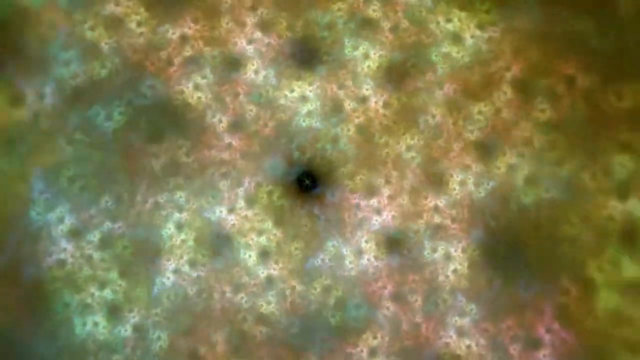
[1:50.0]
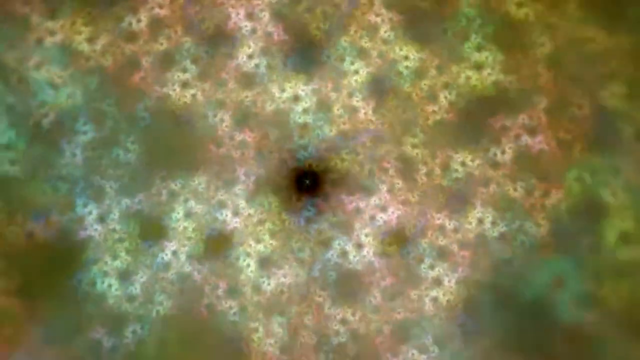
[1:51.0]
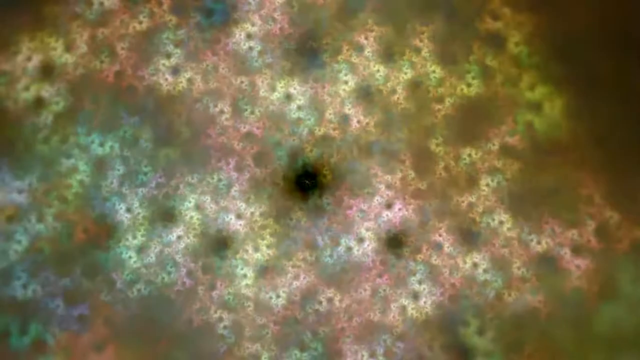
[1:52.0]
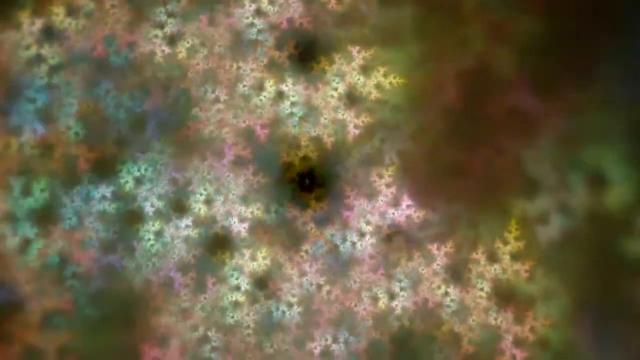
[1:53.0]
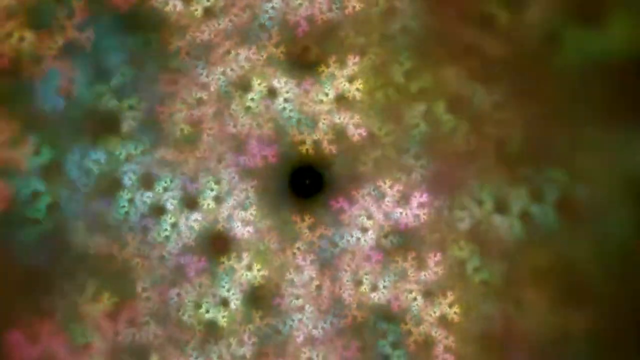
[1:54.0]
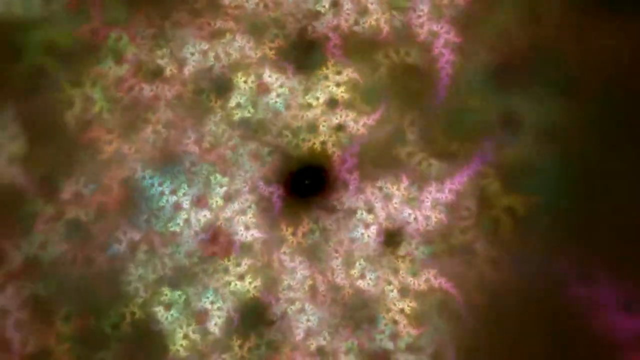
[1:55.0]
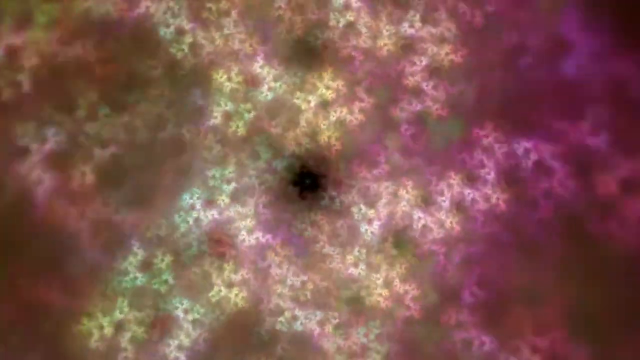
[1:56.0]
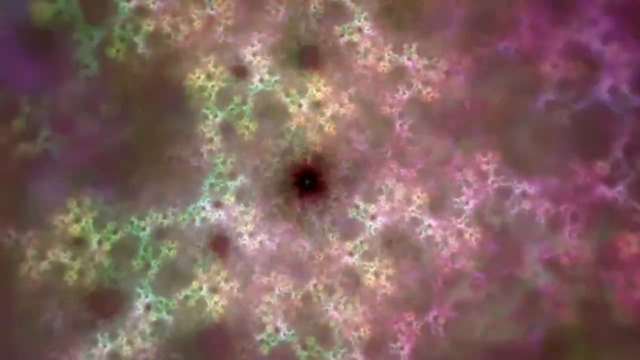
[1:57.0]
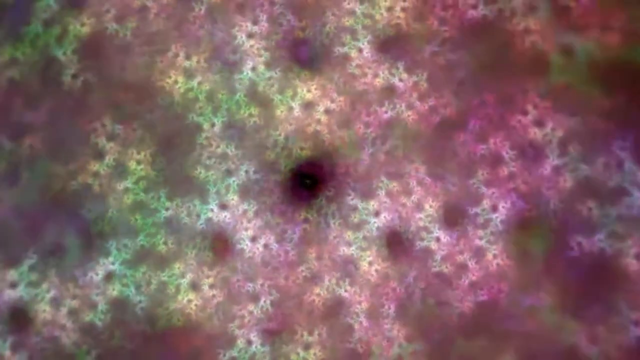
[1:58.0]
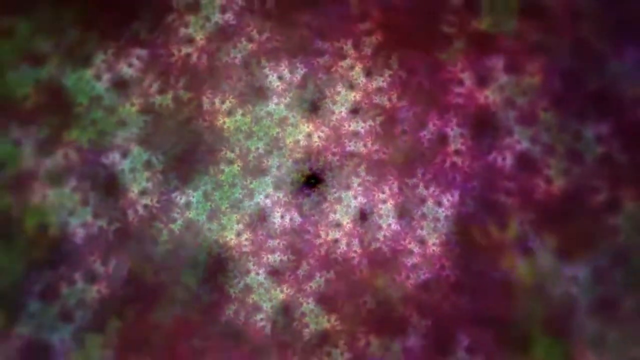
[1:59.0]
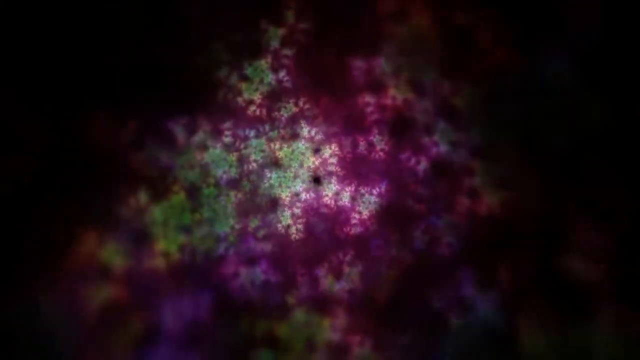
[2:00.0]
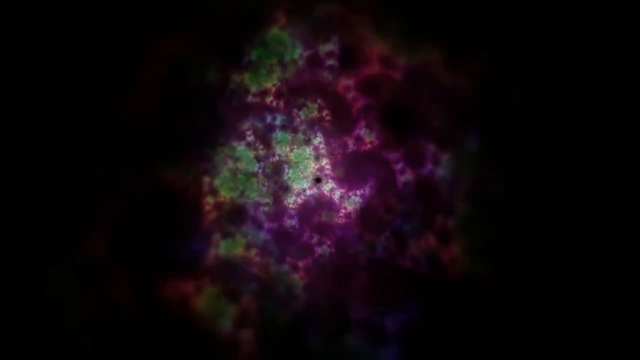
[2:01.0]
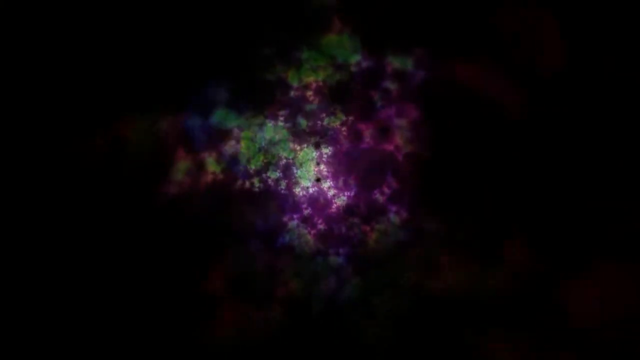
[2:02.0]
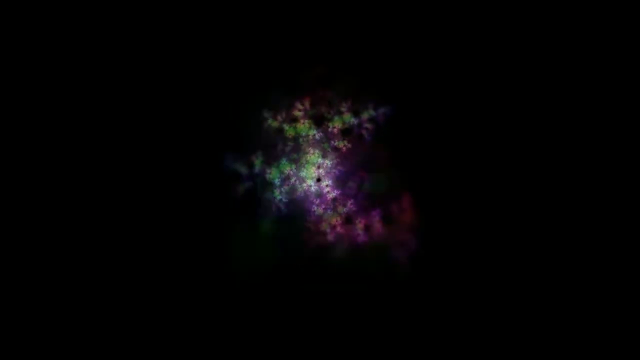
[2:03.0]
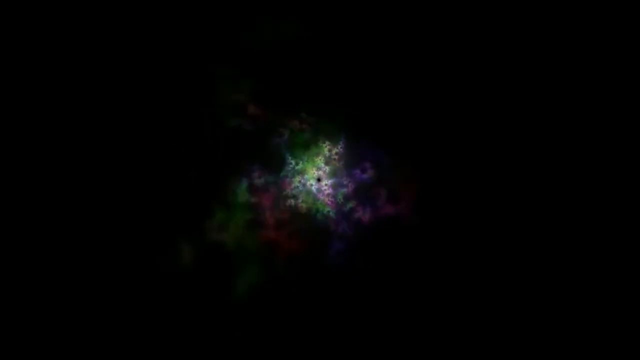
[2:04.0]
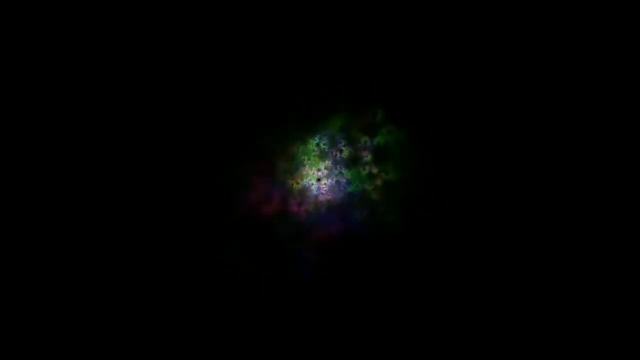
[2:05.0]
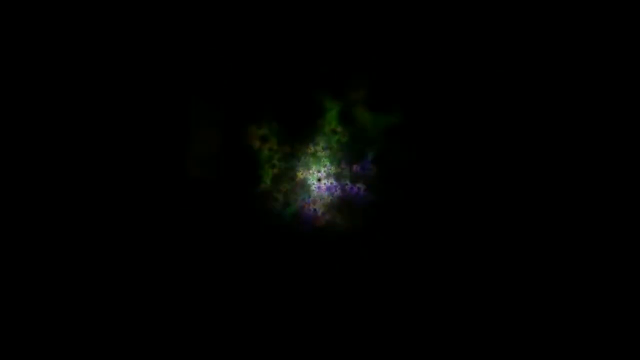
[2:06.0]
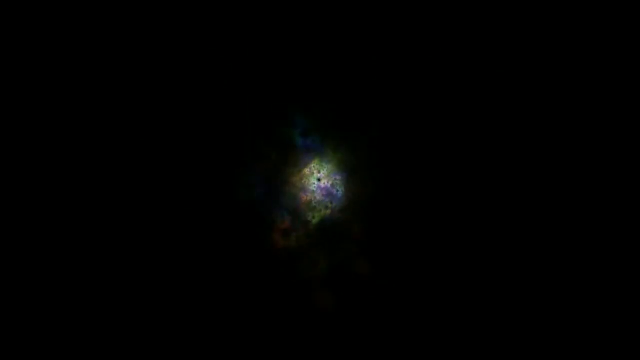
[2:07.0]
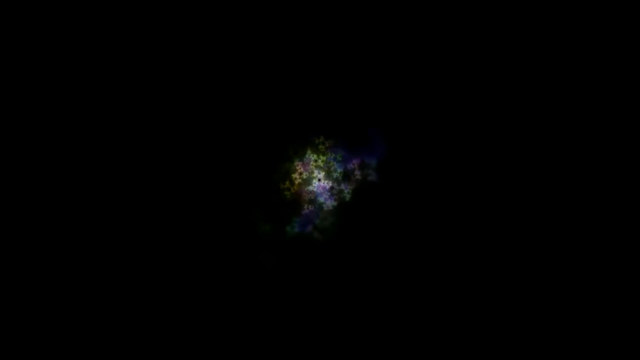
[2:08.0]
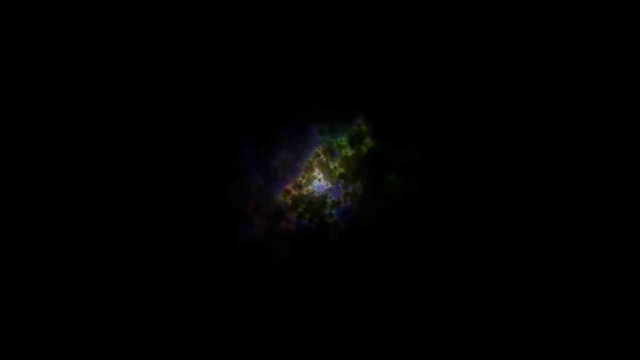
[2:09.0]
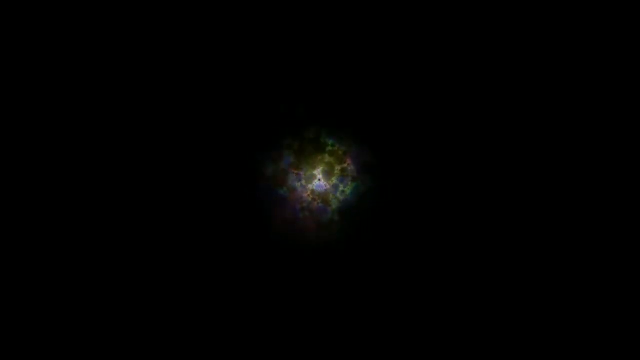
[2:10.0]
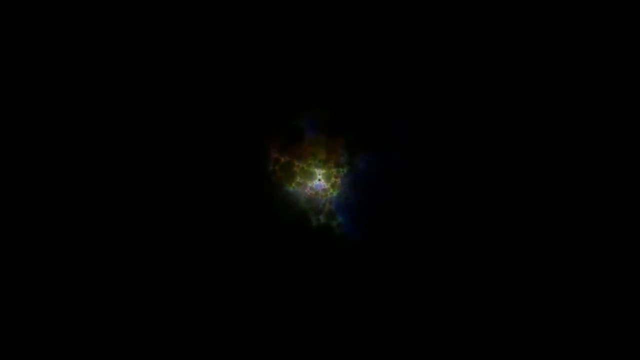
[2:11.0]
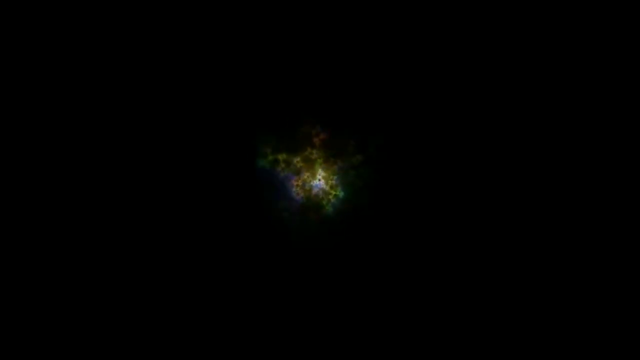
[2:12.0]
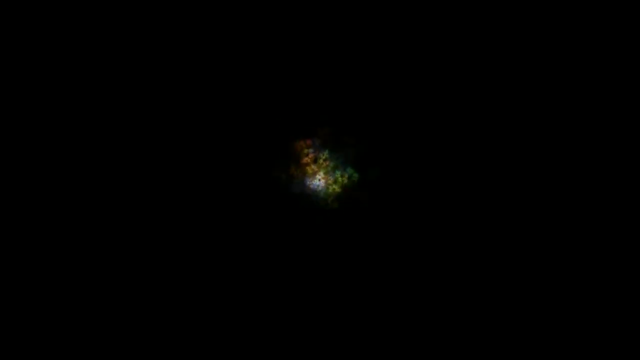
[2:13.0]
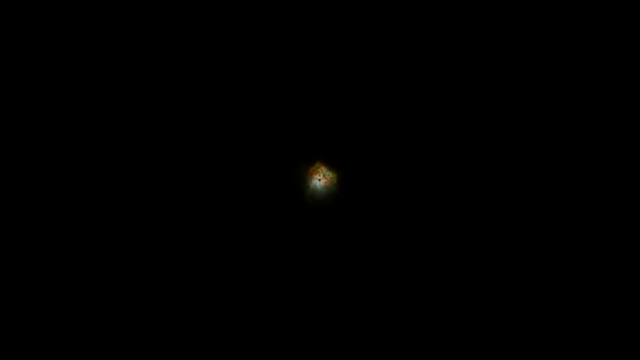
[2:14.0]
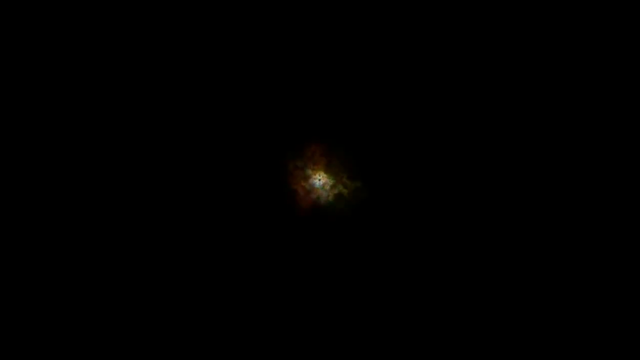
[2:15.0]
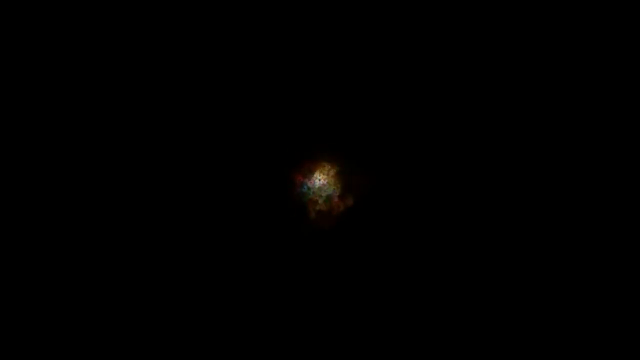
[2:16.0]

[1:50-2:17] A kaleidoscope image has one predominant black center hole that everything swirls around, with smaller little circles outside the center that are less predominant and not as black. The colours are pastel yellows, greens and peaches. As it swirls, the right side becomes less detailed, more colours than detail, while the left side stays a bit more detailed and the center stays a bit more intricate in design. The black center hole remains in the middle as the colours swirl and move around. Pink then becomes the predominant colour and takes over the image as it gets really big; as it shrinks down with the pink taking over, the green is more to the left side. The image shrinks back, revealing more of the black background than before, and keeps swirling in a kaleidoscope pattern until it gets really small toward the center. The predominant colour becomes green with a little yellow, and those colours pop out around the circle. It keeps spinning and gets smaller.